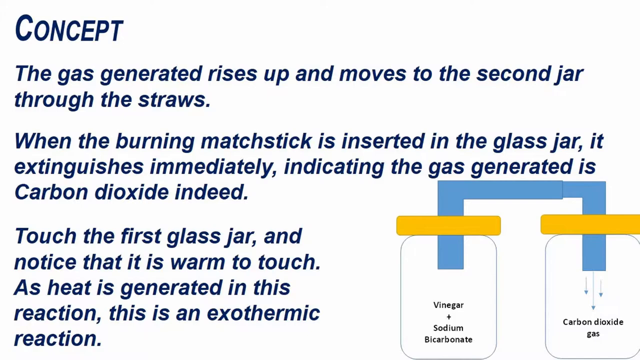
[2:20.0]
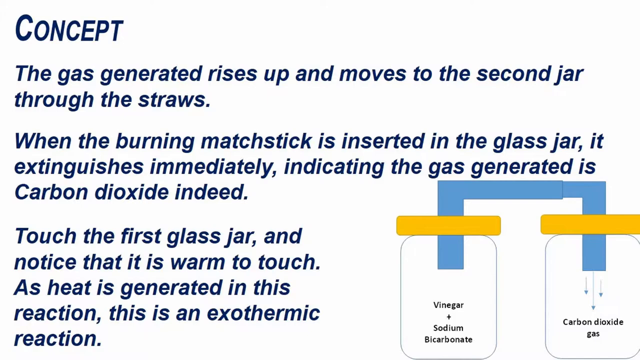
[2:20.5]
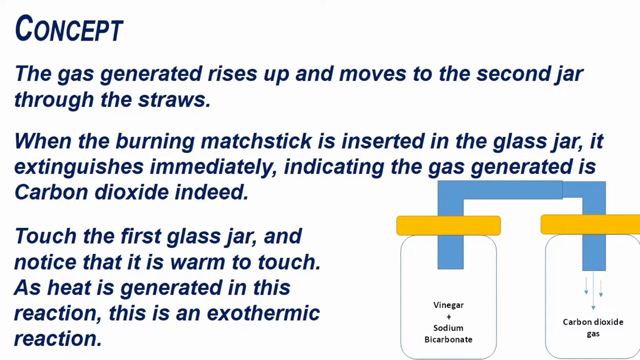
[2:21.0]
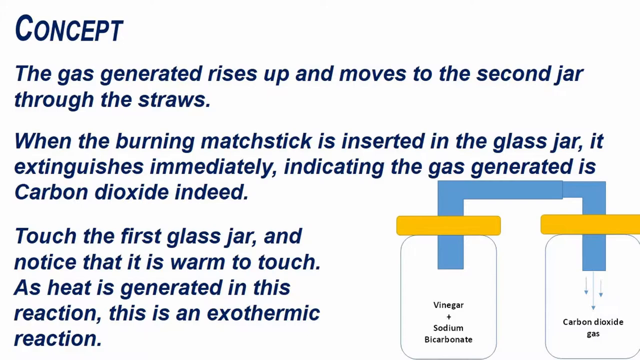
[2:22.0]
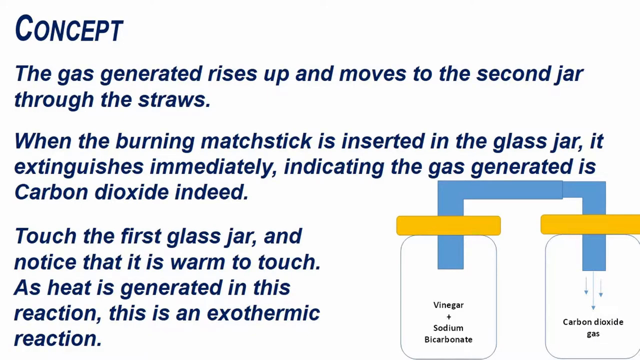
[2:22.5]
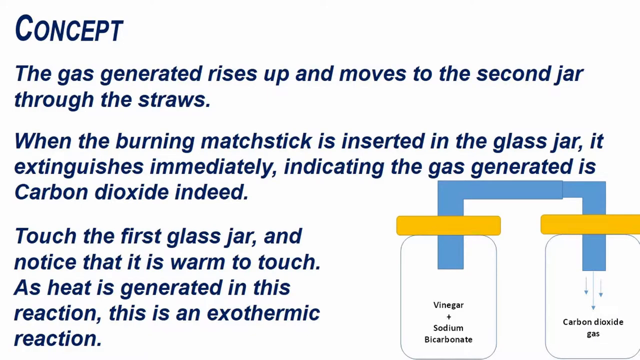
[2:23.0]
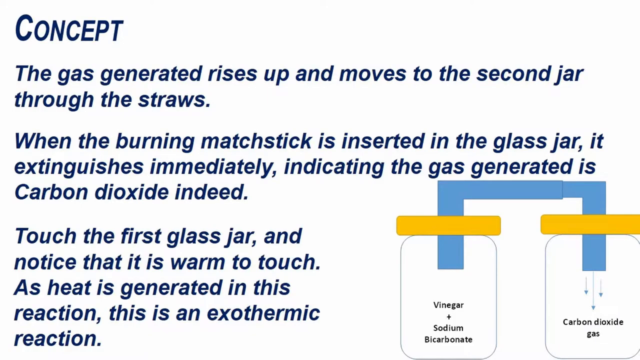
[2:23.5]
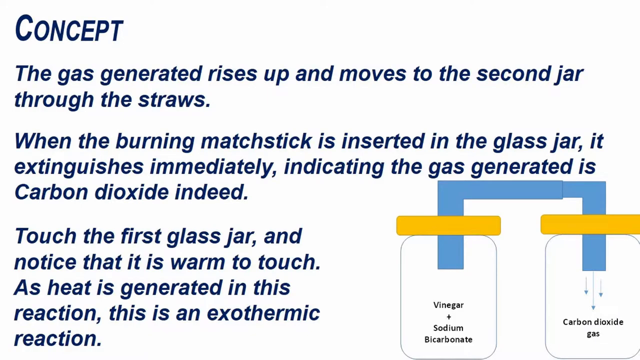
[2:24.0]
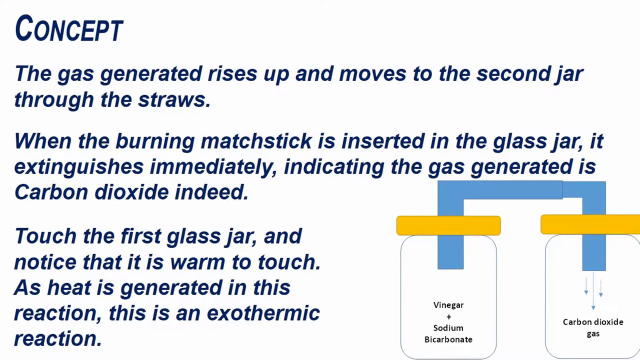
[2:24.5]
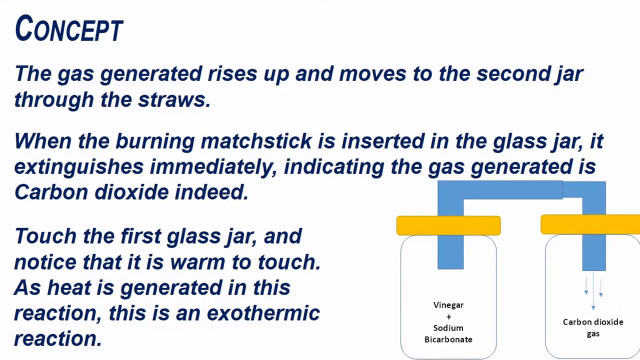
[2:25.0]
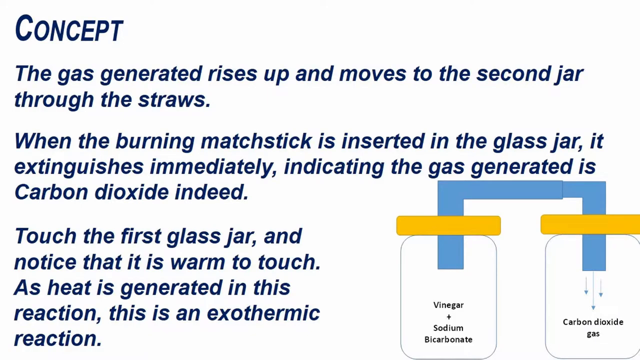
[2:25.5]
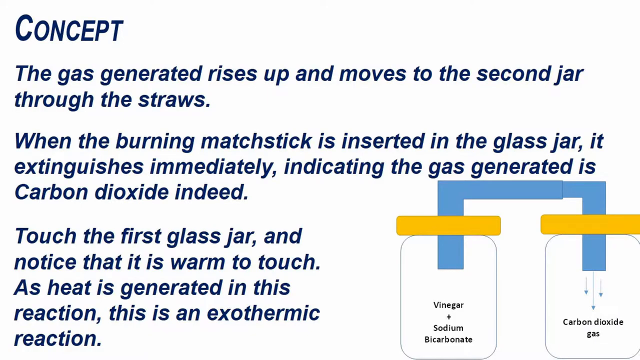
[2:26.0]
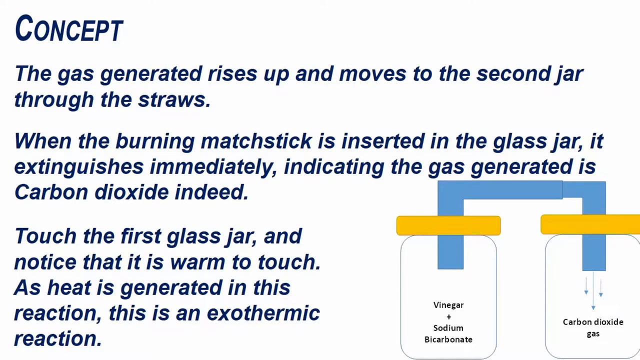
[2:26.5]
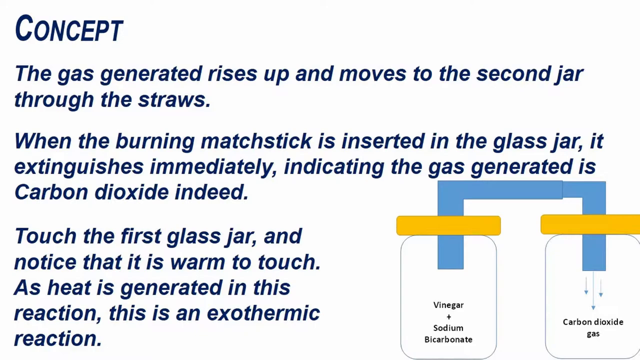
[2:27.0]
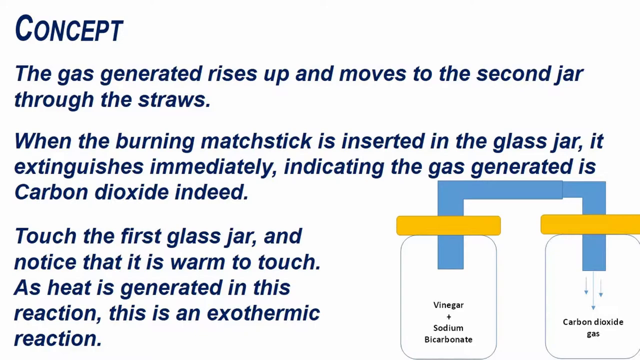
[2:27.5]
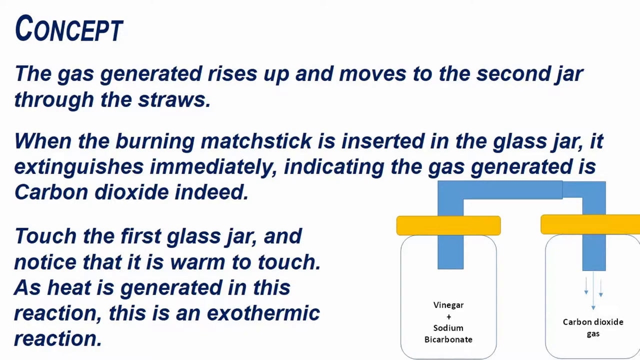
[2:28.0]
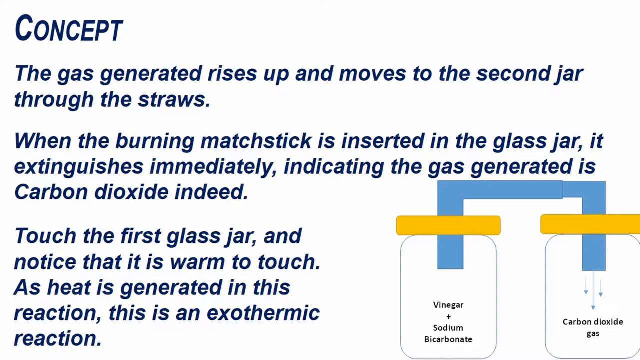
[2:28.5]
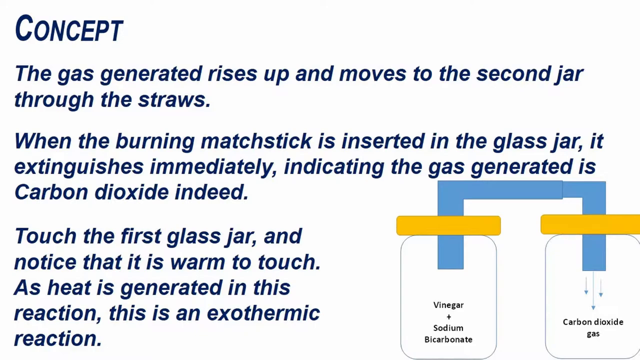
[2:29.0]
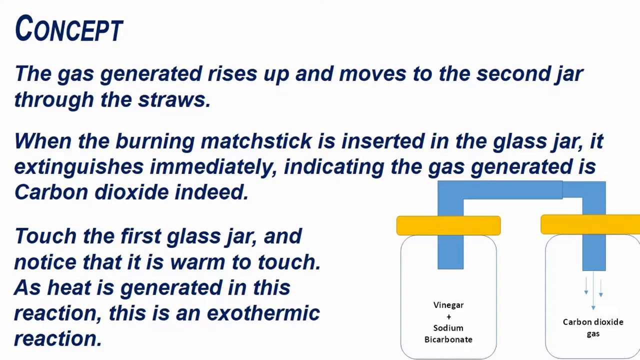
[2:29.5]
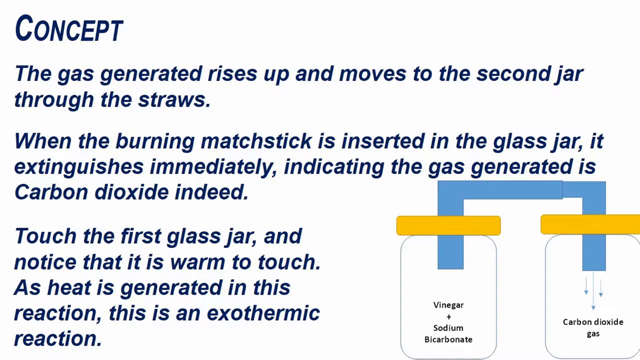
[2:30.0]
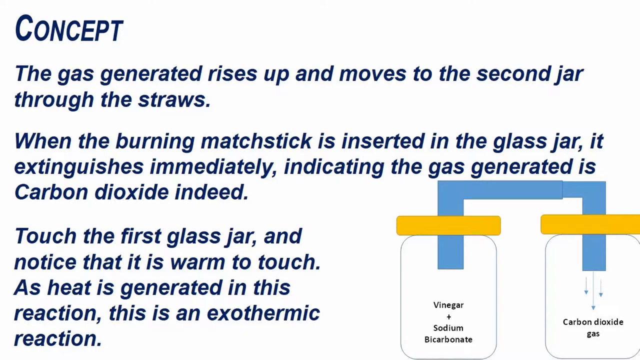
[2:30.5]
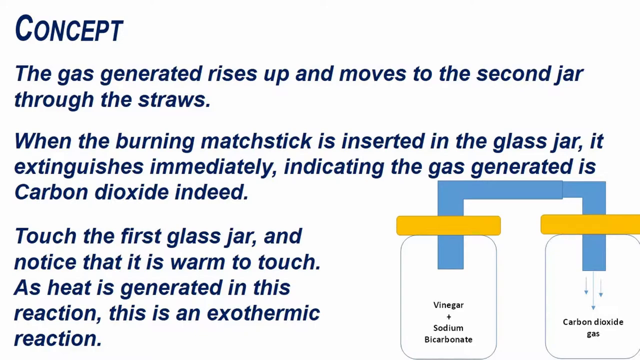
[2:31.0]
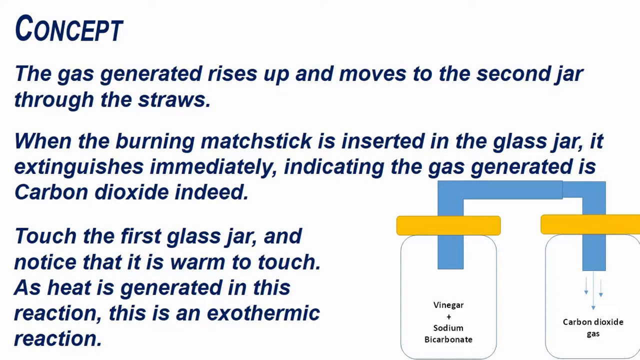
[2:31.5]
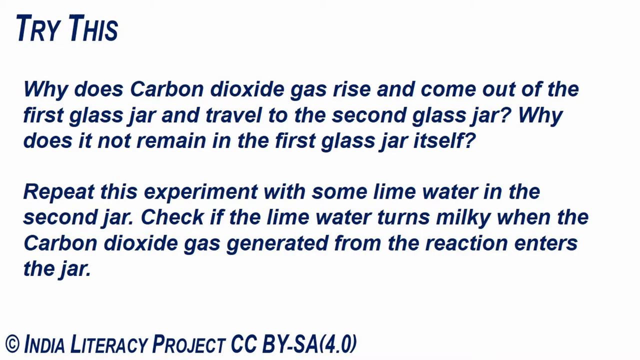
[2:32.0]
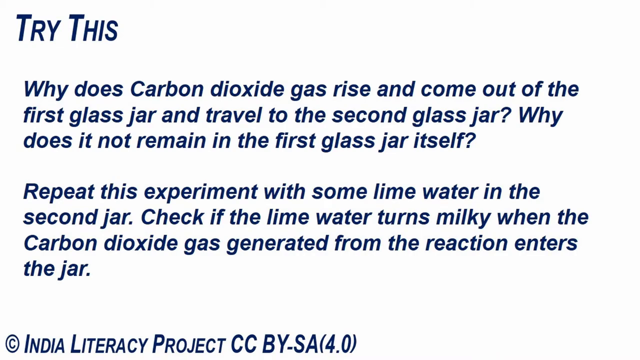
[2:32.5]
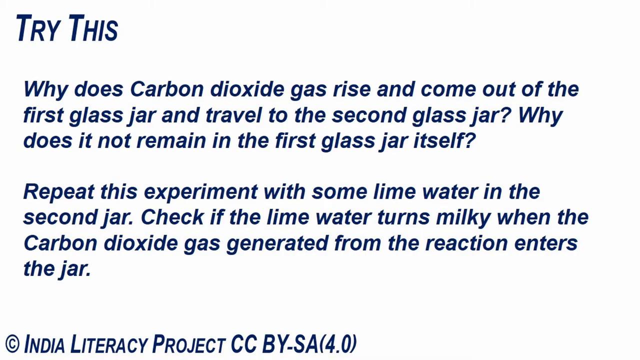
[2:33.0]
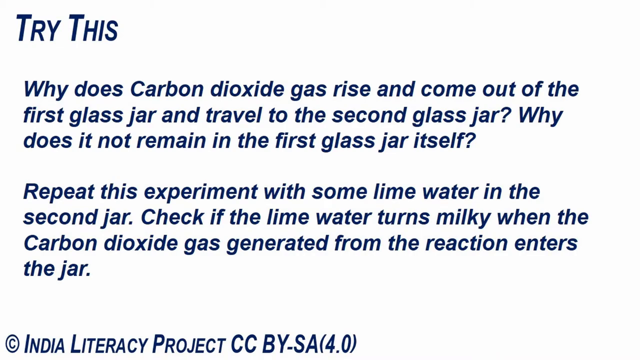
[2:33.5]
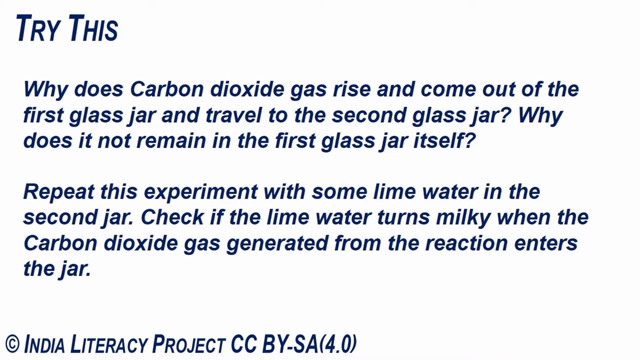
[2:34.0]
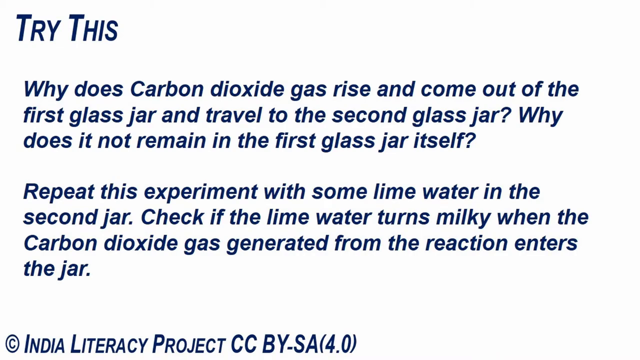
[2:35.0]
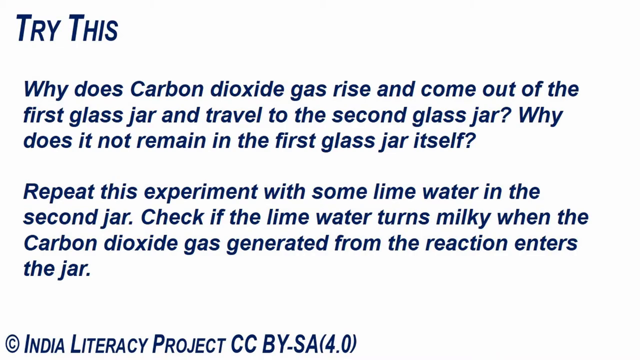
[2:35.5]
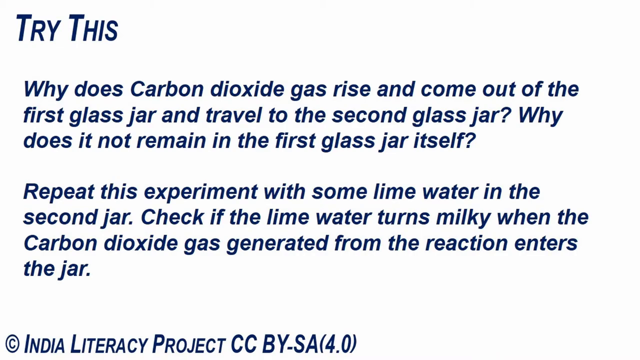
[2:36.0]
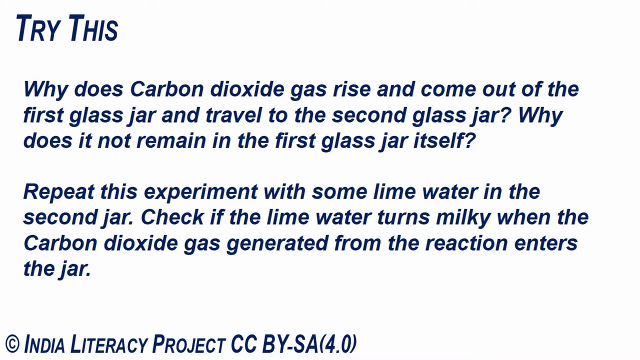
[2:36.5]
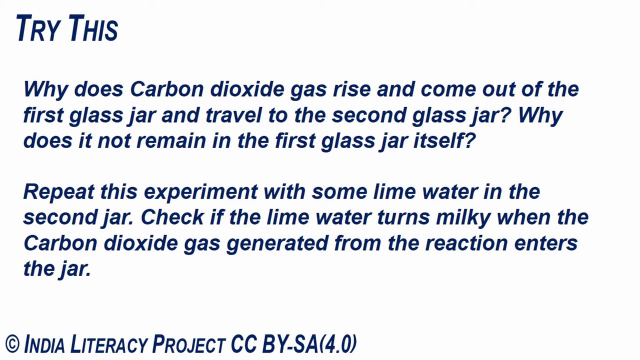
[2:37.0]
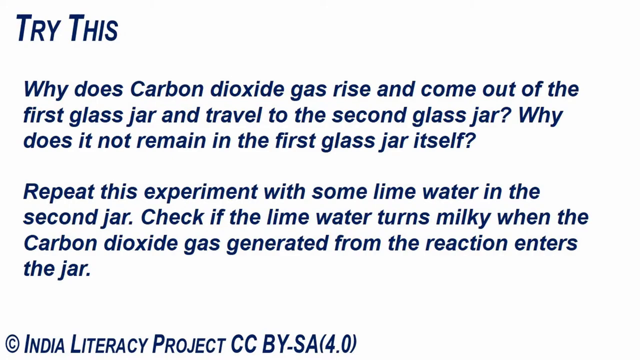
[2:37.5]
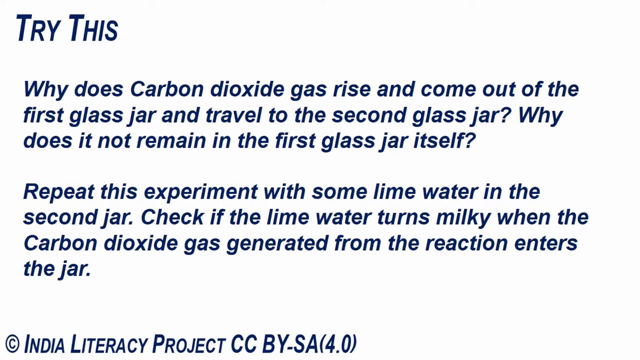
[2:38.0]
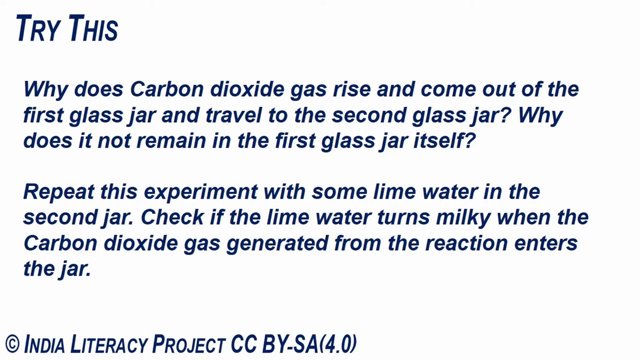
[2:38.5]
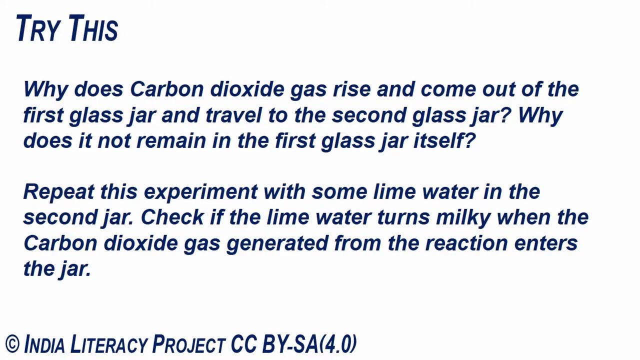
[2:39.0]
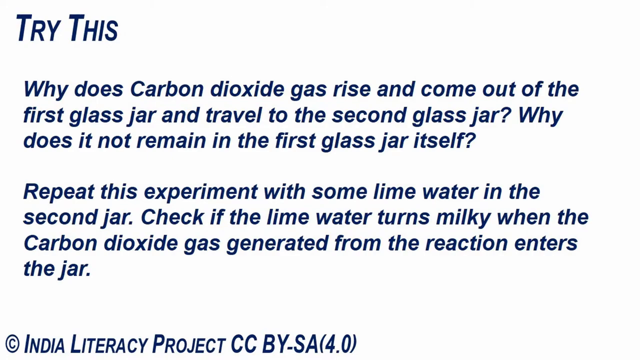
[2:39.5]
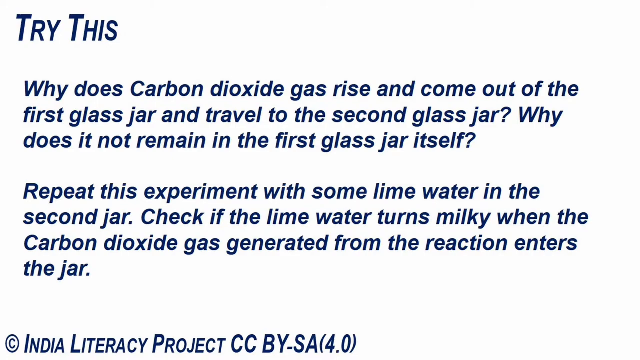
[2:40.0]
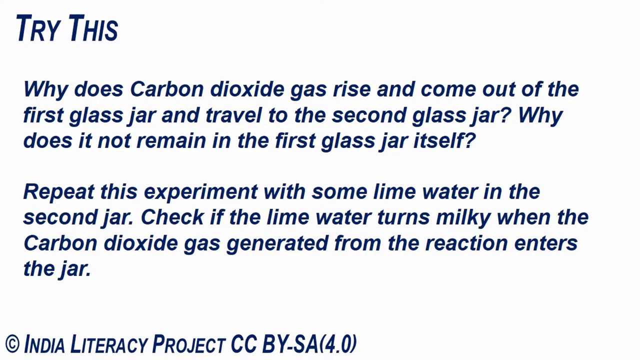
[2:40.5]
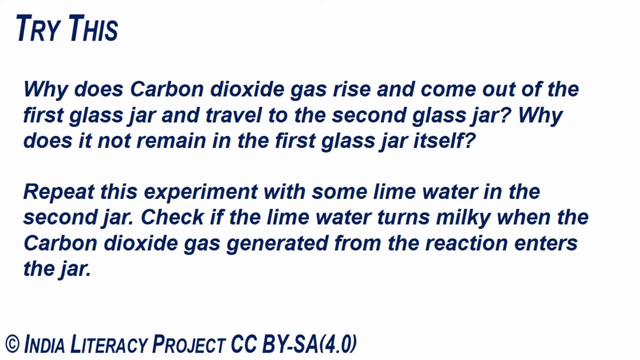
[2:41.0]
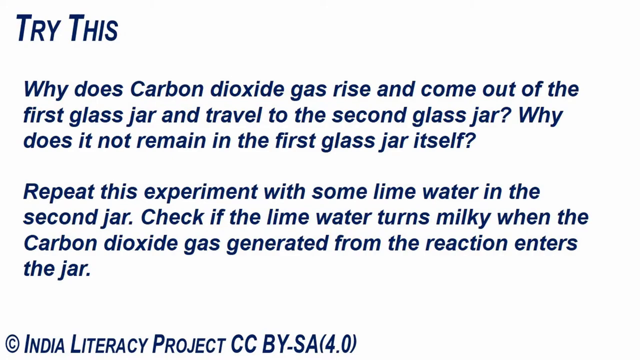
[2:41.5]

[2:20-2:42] The same concept slide is shown, explaining that the generated gas rises up to the second jar through the straws, that a burning matchstick inserted into the glass jar extinguishes immediately, indicating the gas is carbon dioxide, and that touching the left glass shows heat is generated because it is an exothermic reaction. The diagram in the corner shows jars with yellow lids and a blue straw. The next slide has a white background with blue letters and says "try this": "Why does carbon dioxide gas rise and come out of the first glass jar and travel to the second glass jar? Why does it not remain in the first glass jar itself? Repeat this experiment with some lime water in the second jar and check if the lime water turns milky when the carbon dioxide gas generated from the reaction enters this jar." At the bottom it says "copyright India Literacy Project CC by SA".